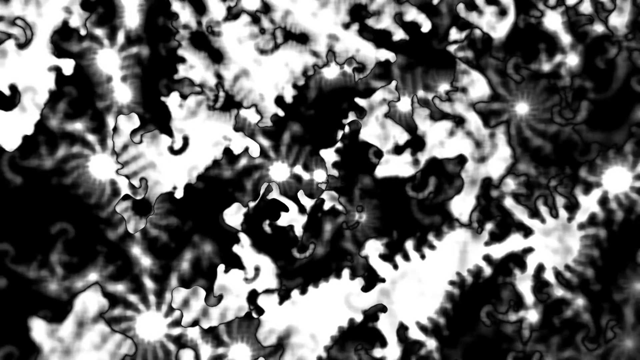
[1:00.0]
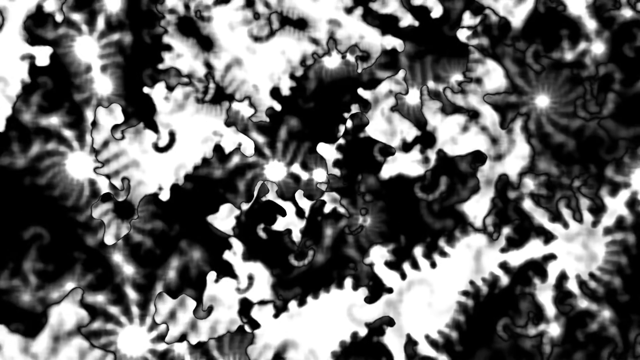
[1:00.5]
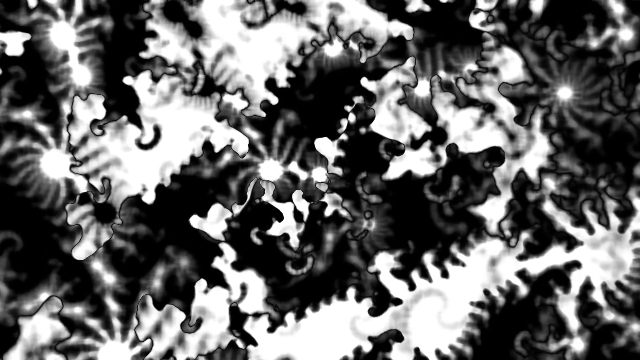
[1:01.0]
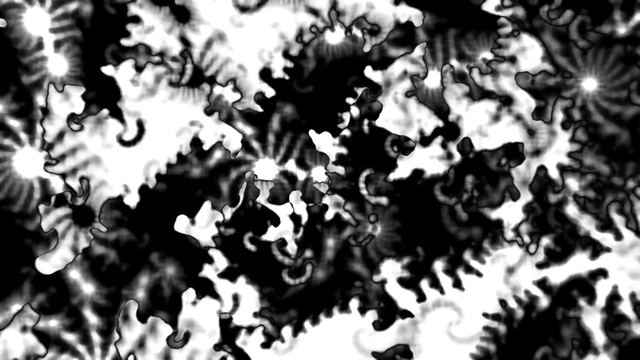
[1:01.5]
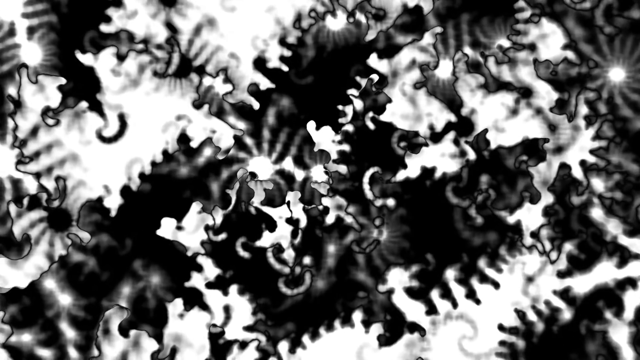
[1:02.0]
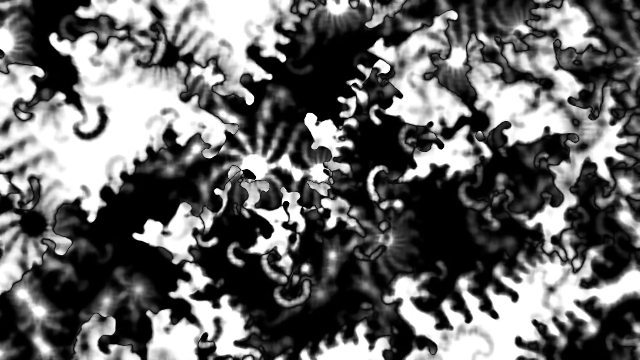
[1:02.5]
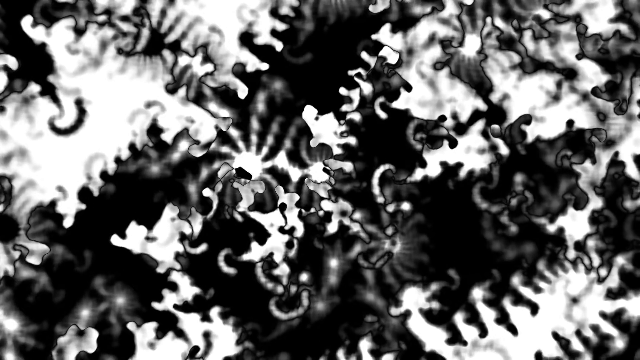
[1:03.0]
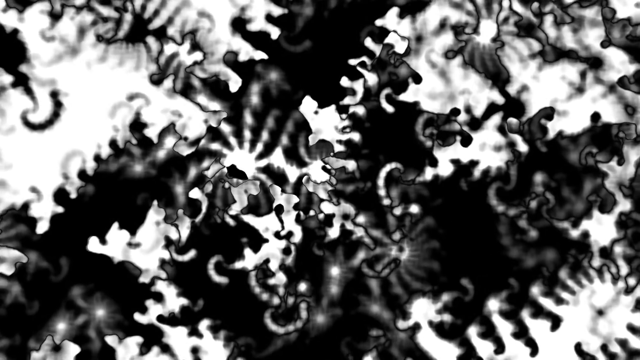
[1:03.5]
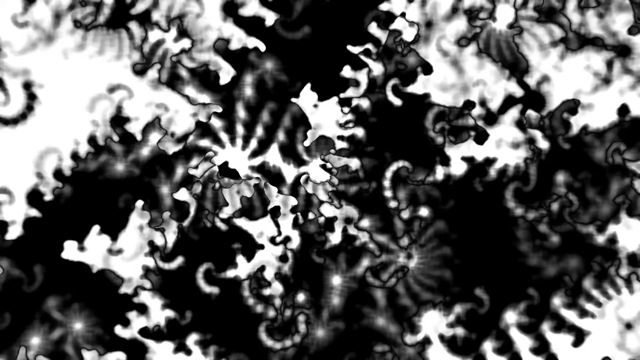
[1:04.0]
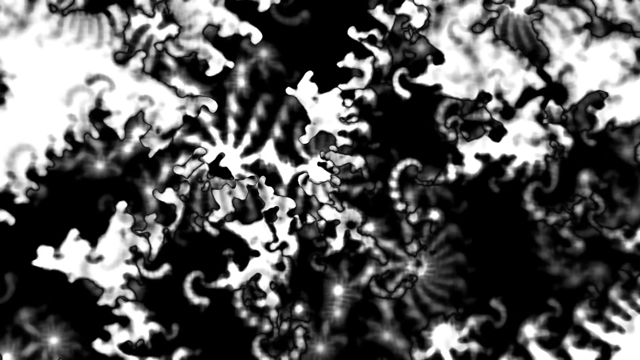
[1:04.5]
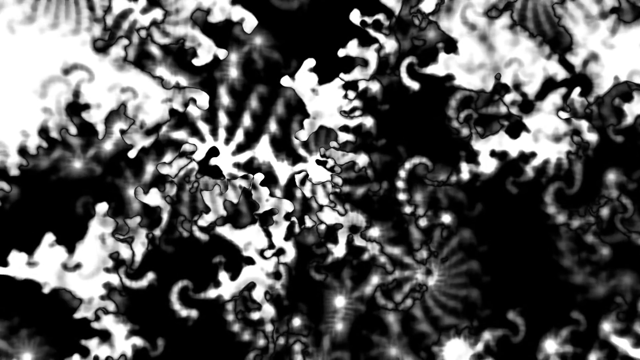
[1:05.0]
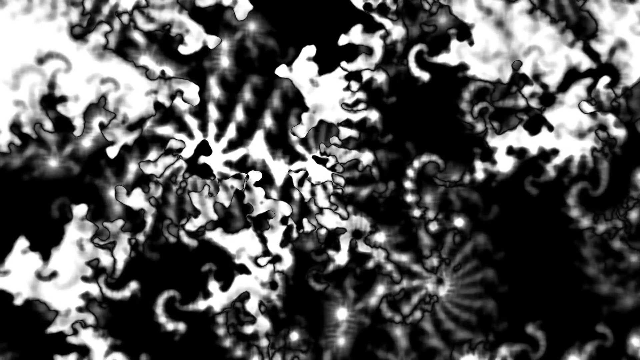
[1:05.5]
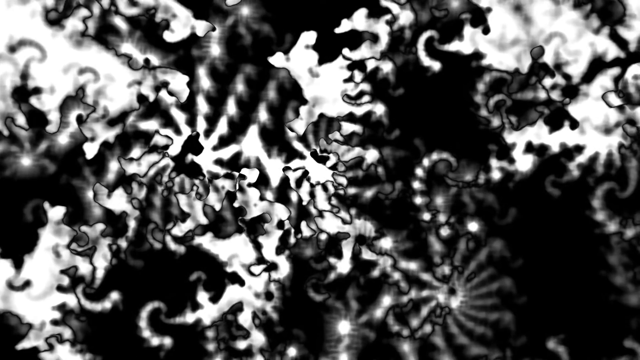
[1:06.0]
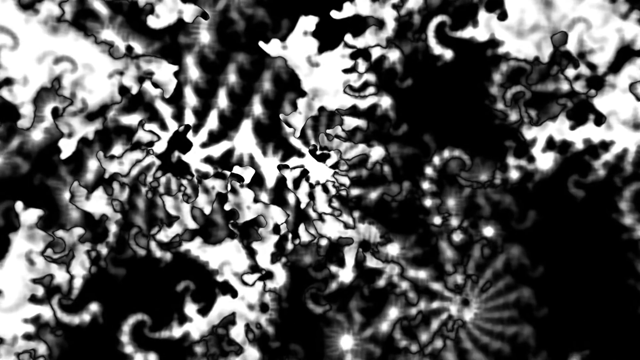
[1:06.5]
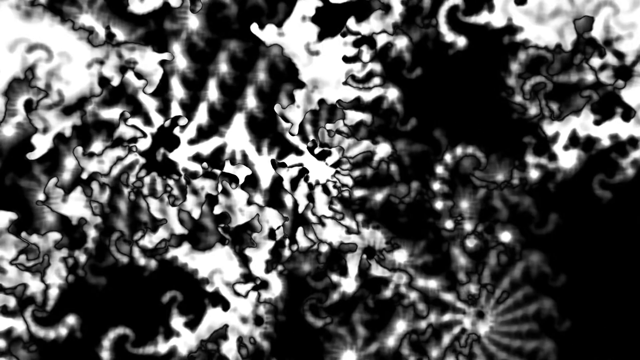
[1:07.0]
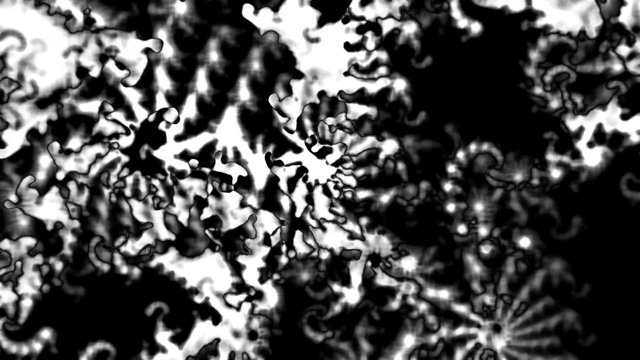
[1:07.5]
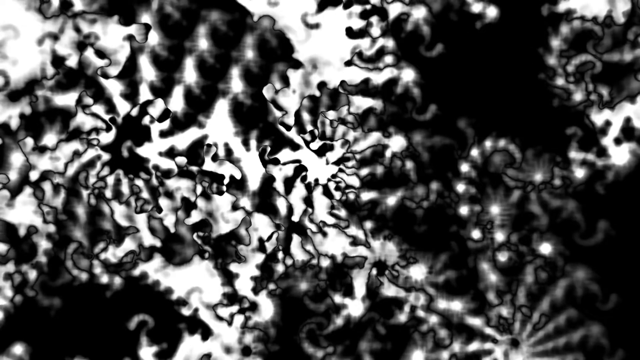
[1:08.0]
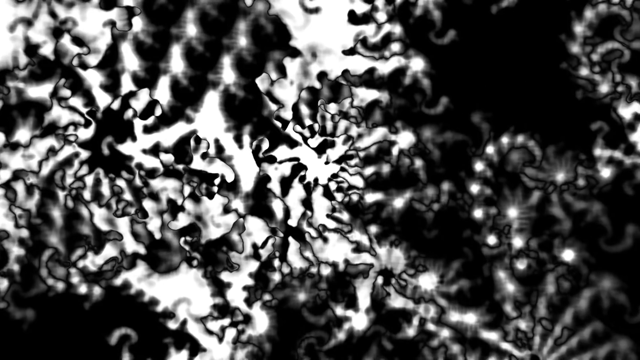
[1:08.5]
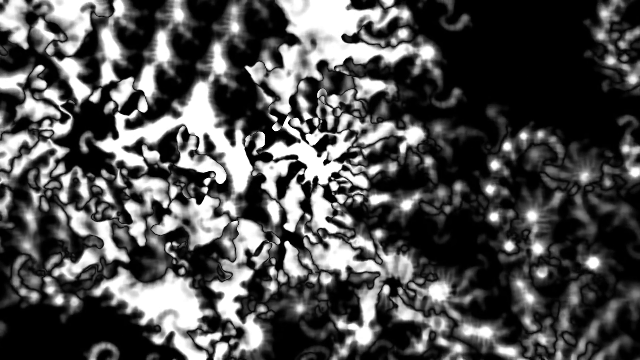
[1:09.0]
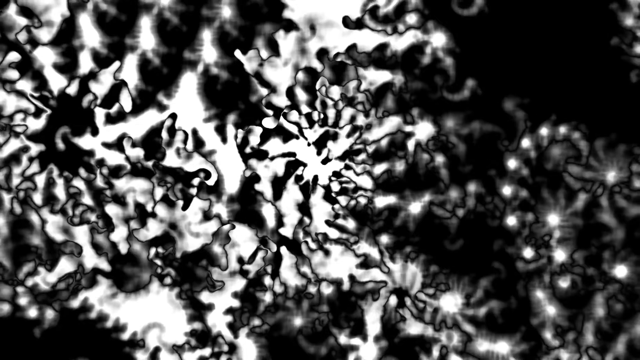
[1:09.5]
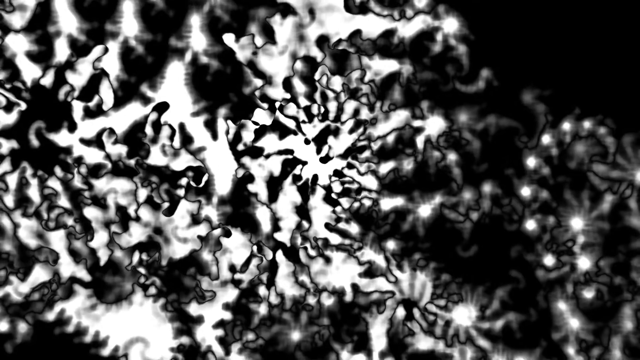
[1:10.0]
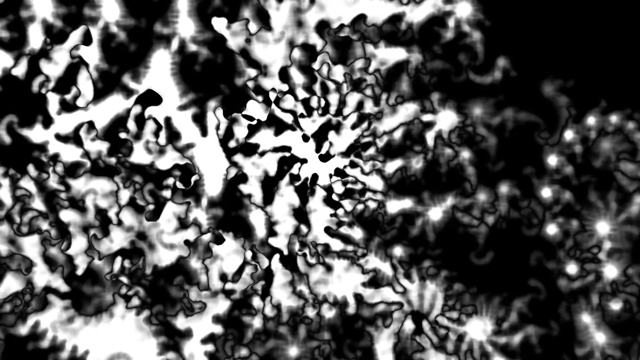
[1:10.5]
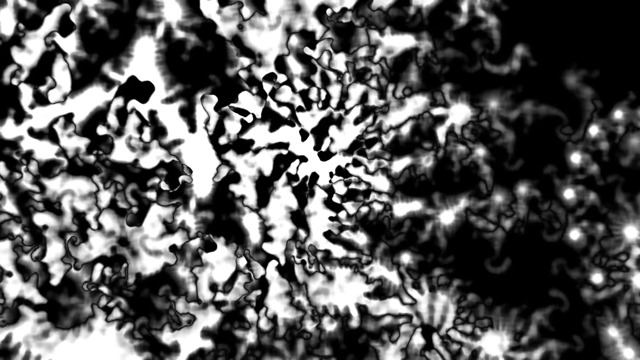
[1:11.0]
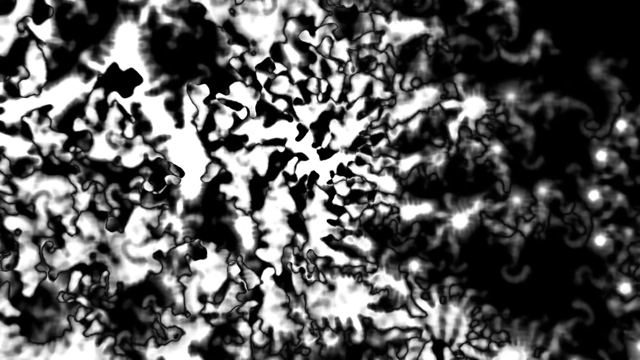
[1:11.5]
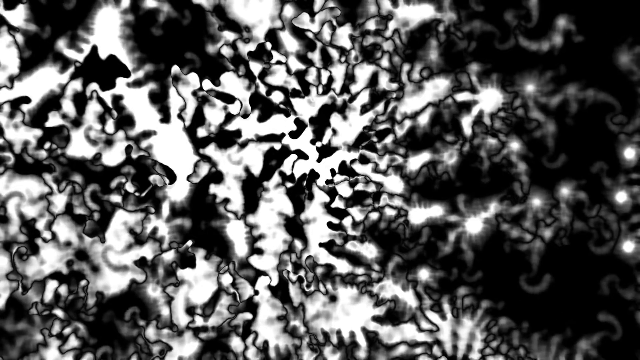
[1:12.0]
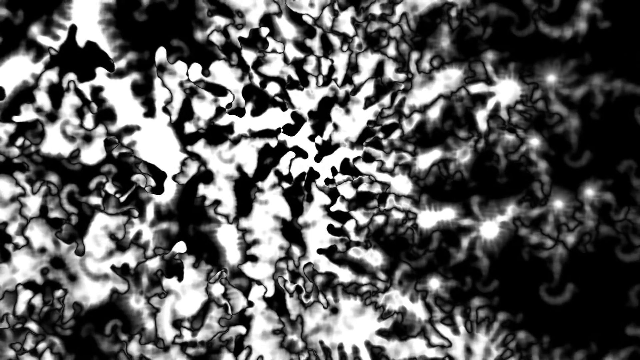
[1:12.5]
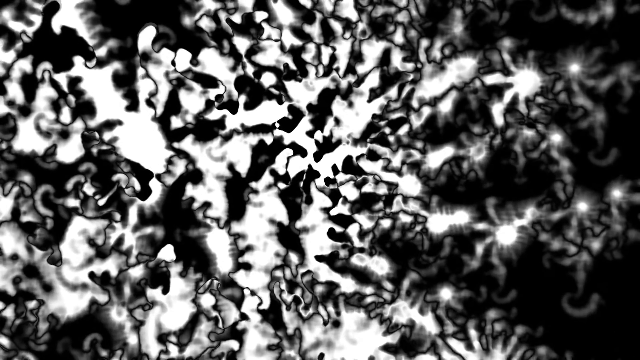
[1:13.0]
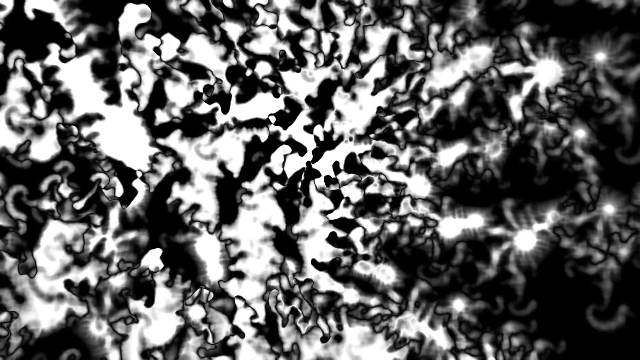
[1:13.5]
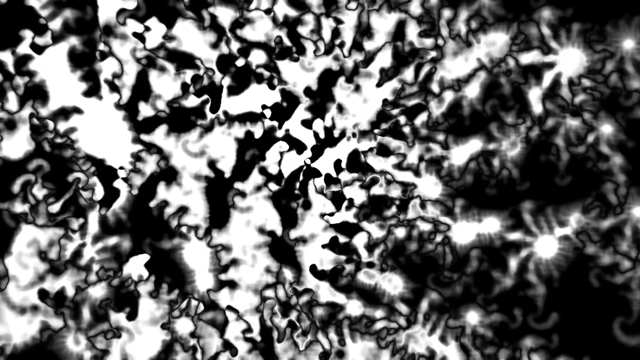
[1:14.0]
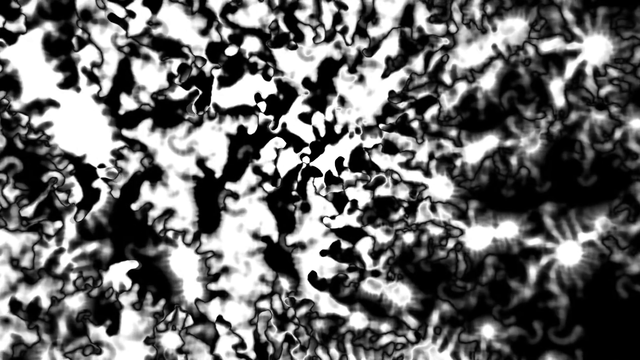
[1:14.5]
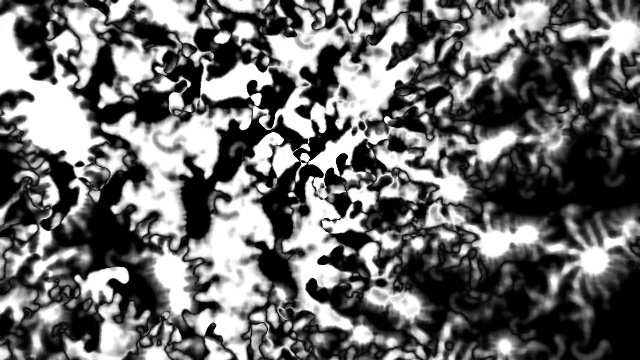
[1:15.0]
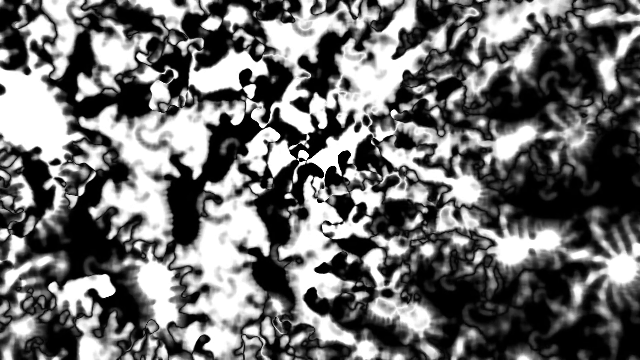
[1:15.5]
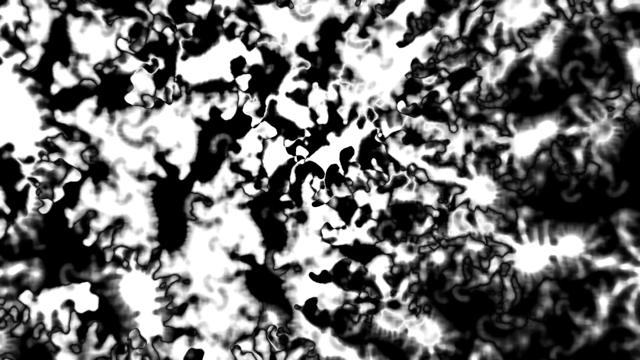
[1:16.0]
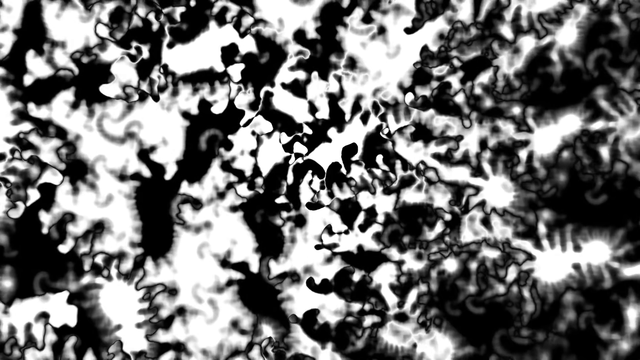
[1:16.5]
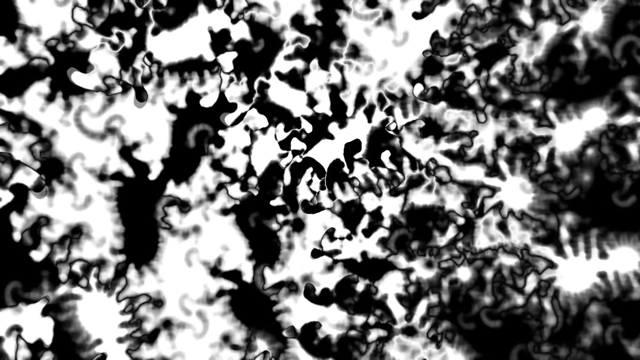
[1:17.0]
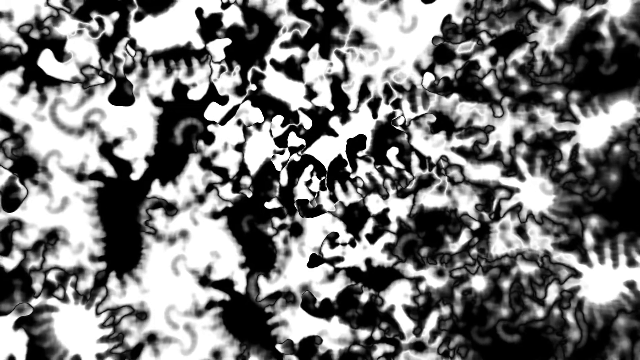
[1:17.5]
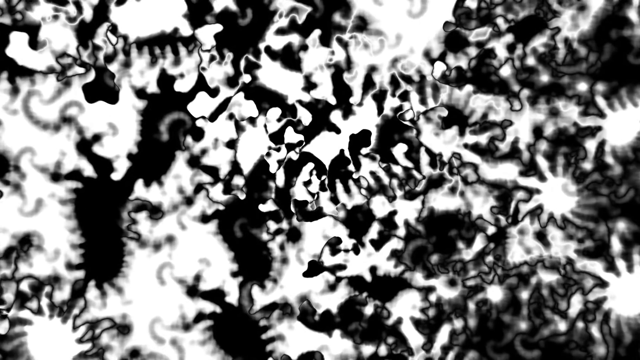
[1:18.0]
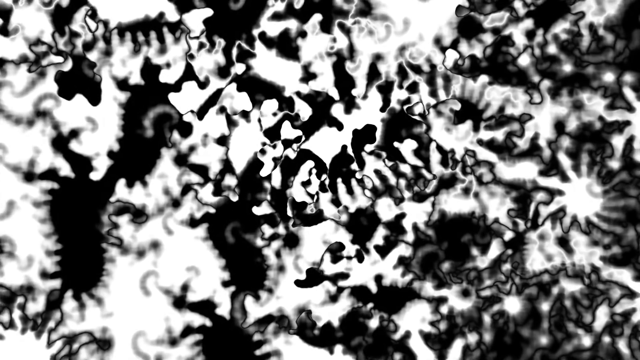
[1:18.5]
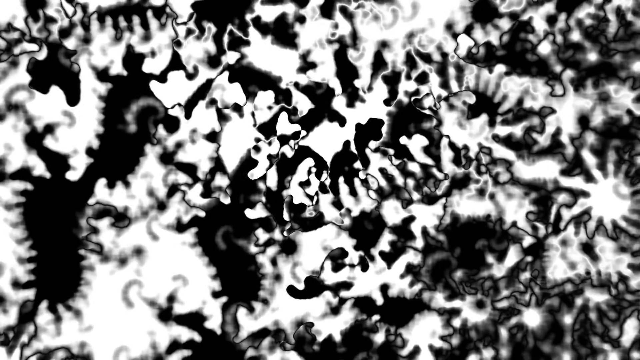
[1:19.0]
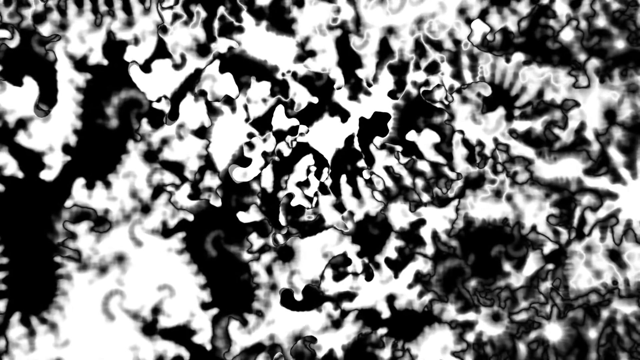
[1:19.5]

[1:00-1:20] Something is continuously zooming, and something is forming with white lights and black lights. Things grow larger as the zoom continues without stopping.